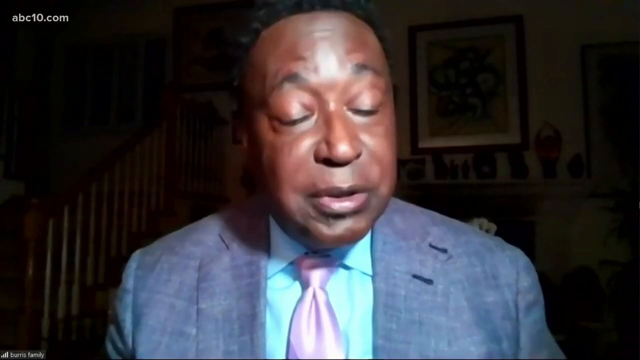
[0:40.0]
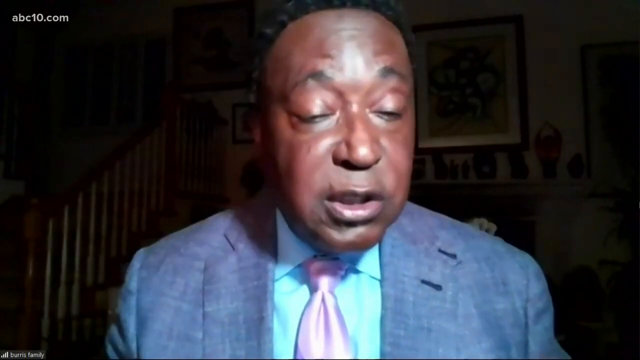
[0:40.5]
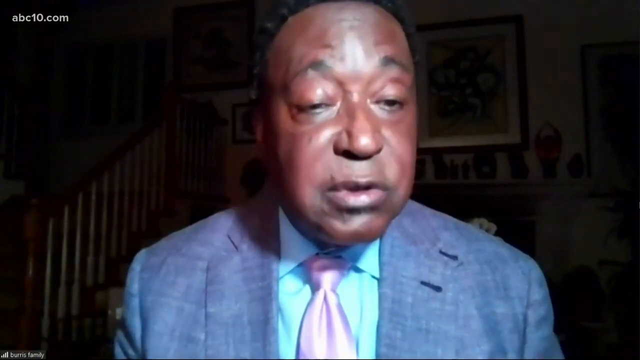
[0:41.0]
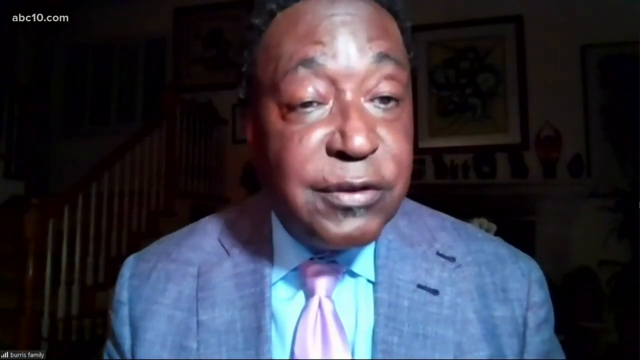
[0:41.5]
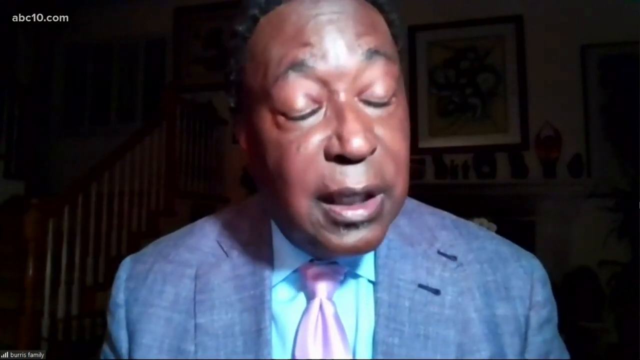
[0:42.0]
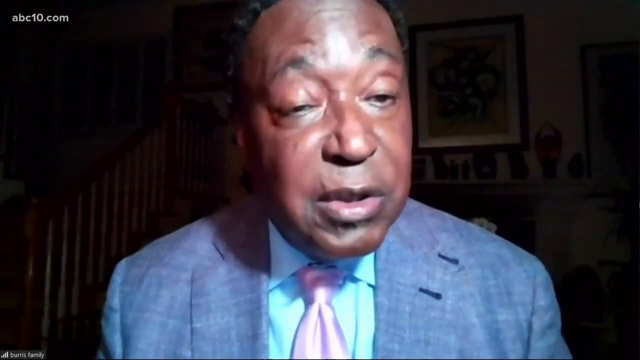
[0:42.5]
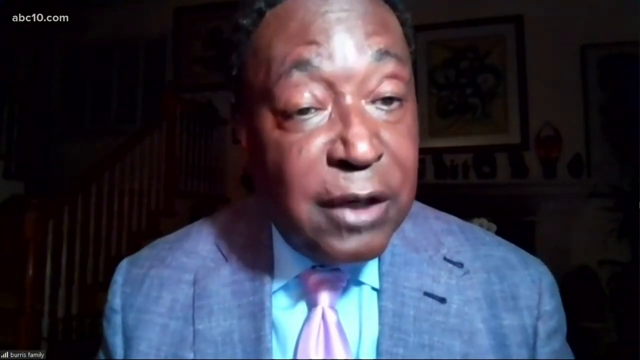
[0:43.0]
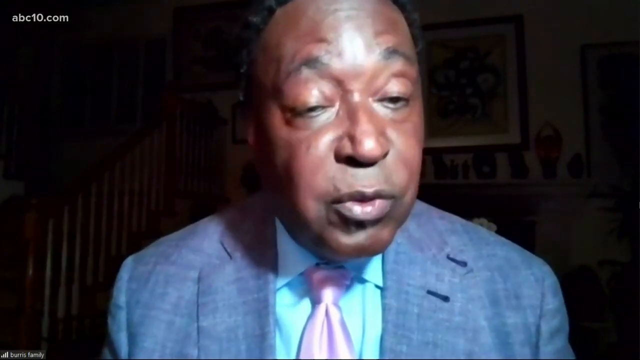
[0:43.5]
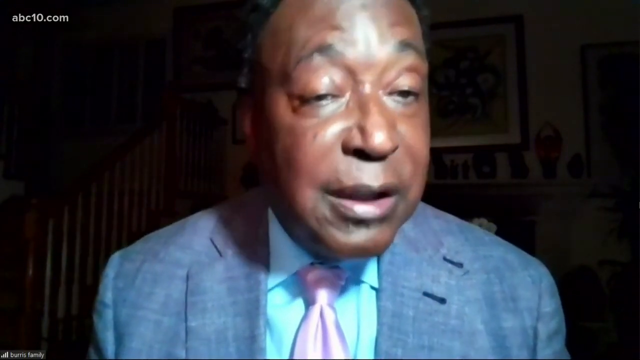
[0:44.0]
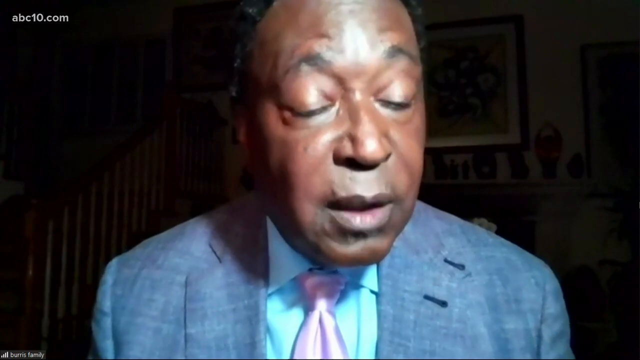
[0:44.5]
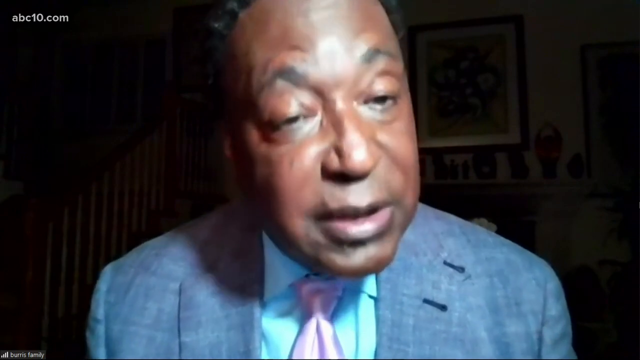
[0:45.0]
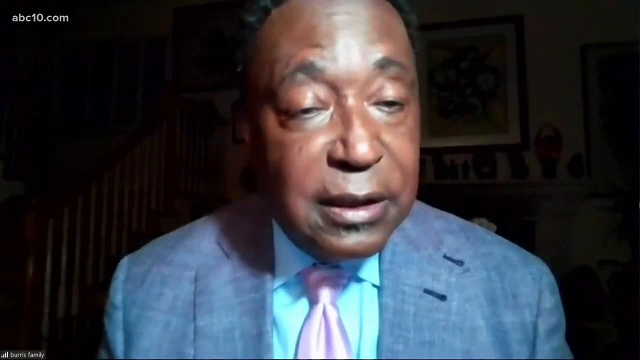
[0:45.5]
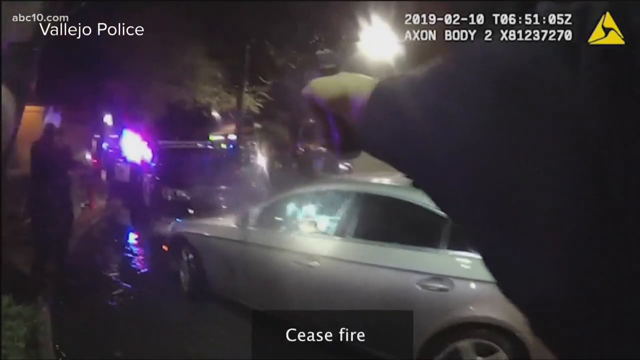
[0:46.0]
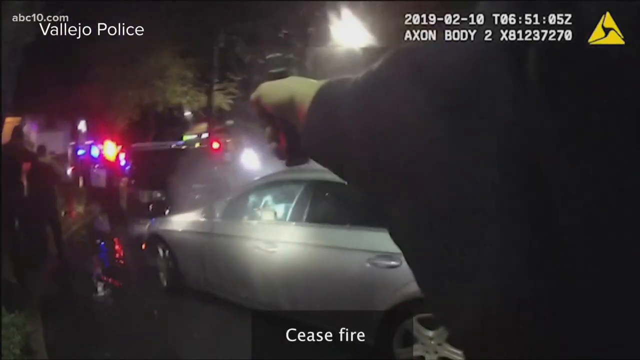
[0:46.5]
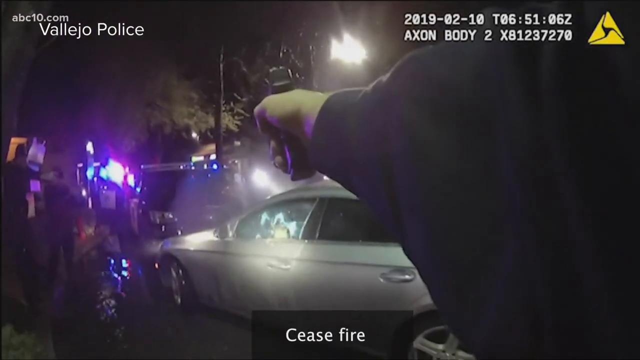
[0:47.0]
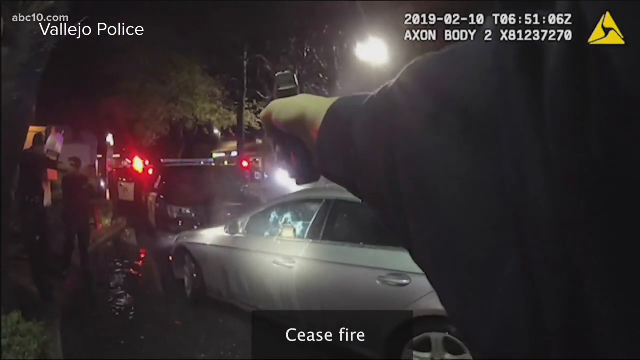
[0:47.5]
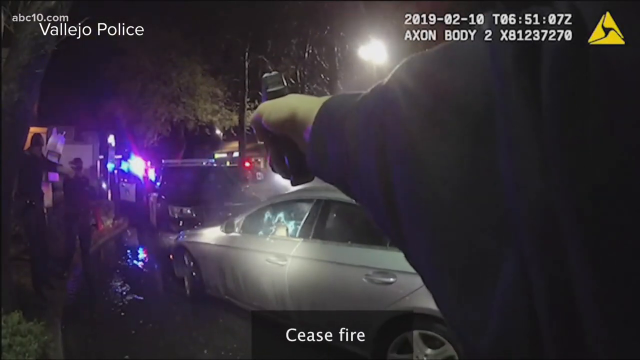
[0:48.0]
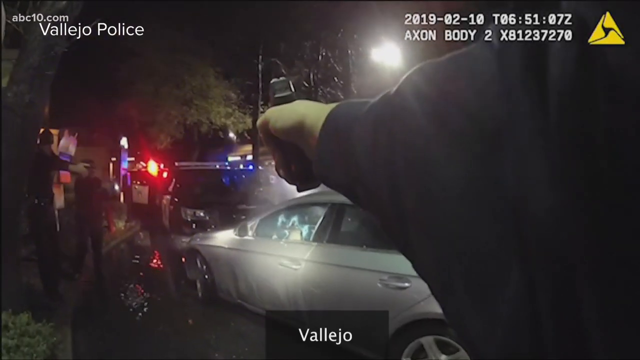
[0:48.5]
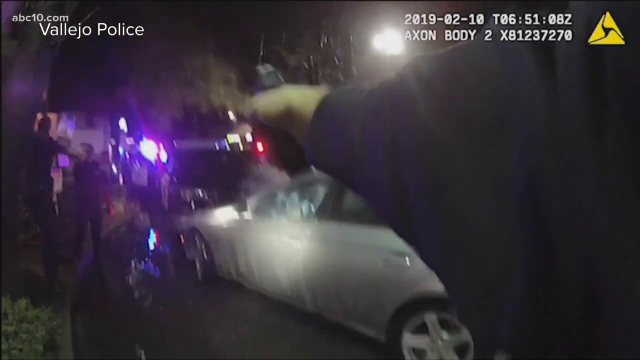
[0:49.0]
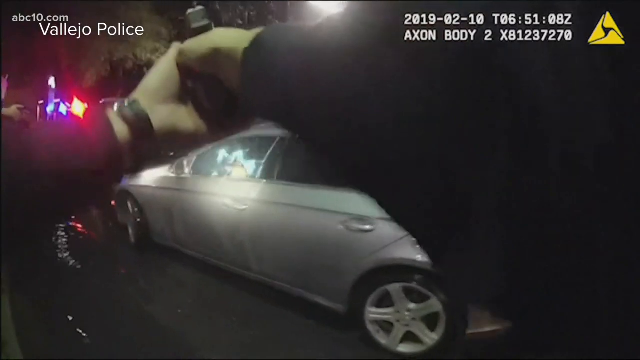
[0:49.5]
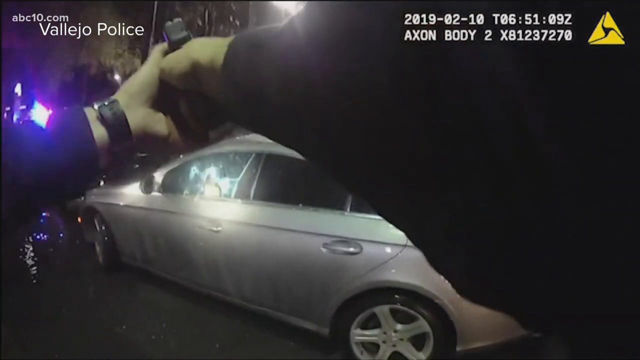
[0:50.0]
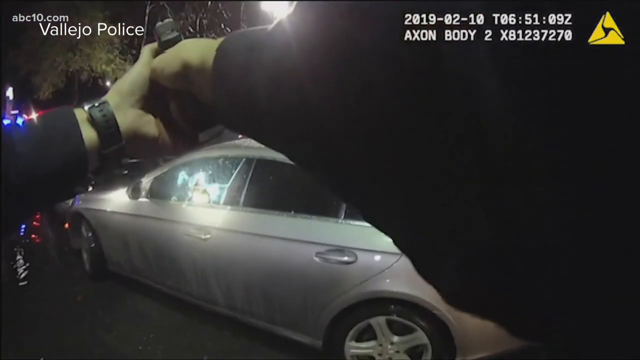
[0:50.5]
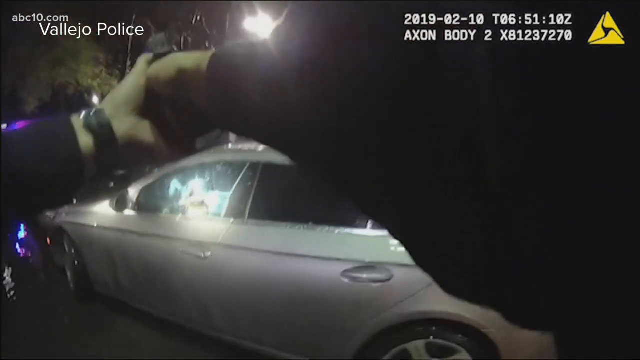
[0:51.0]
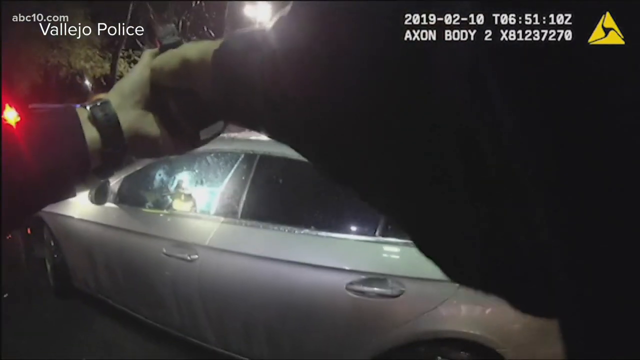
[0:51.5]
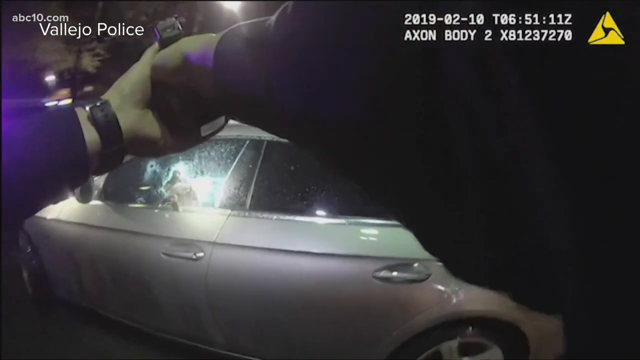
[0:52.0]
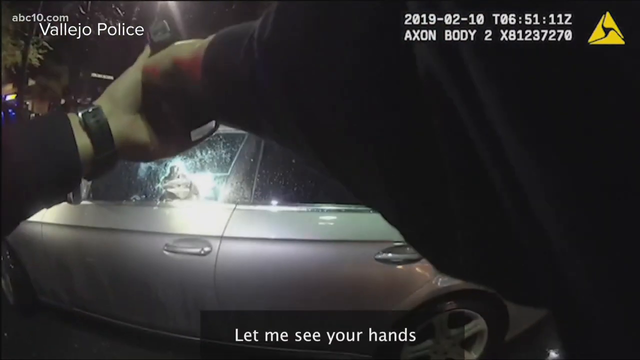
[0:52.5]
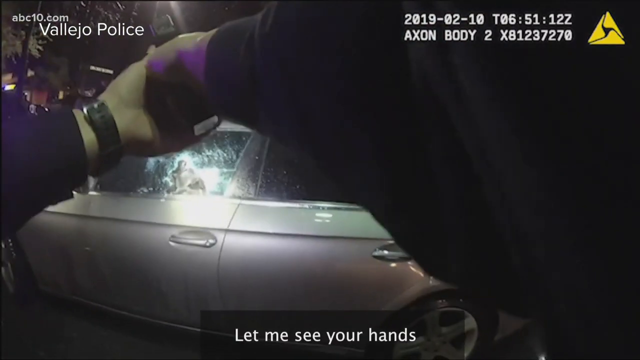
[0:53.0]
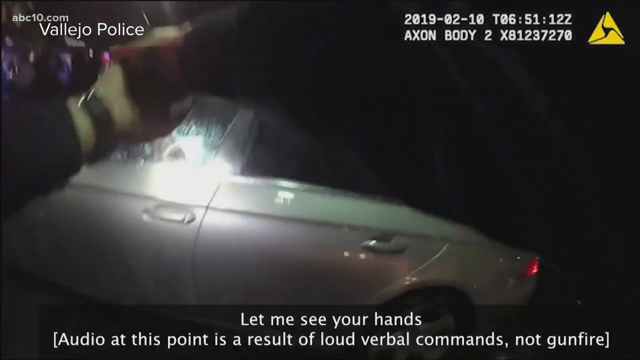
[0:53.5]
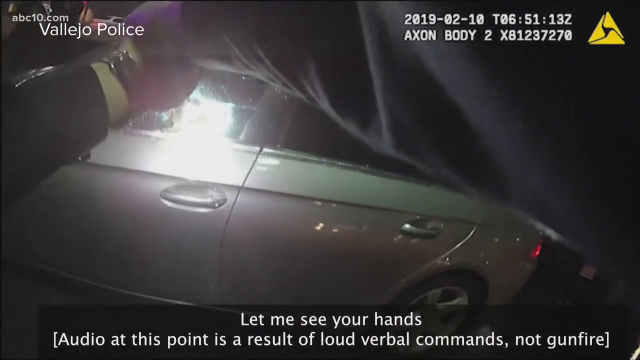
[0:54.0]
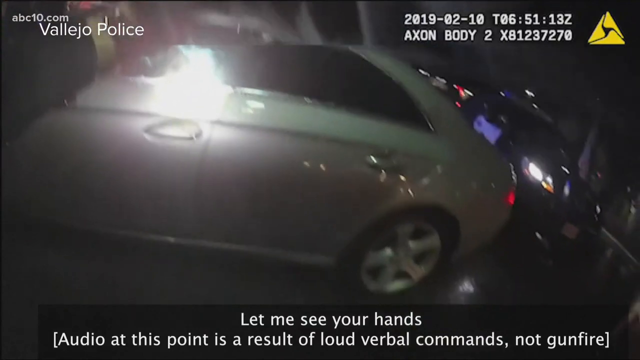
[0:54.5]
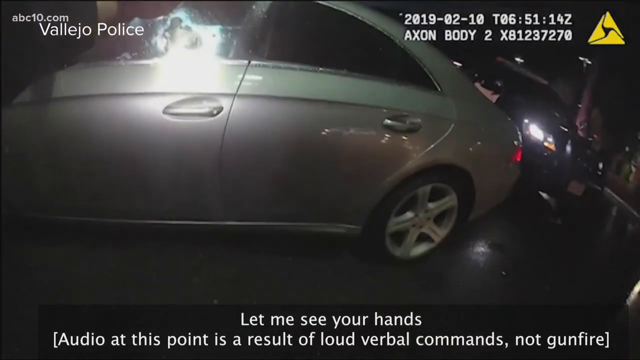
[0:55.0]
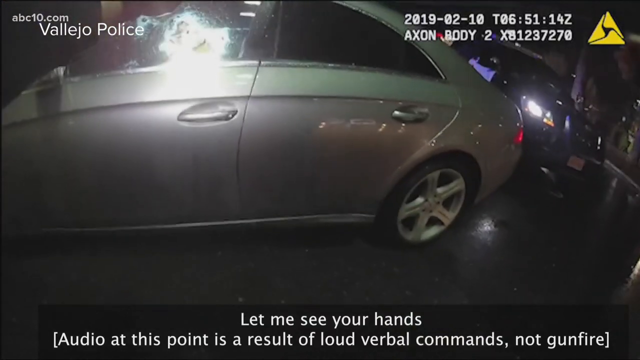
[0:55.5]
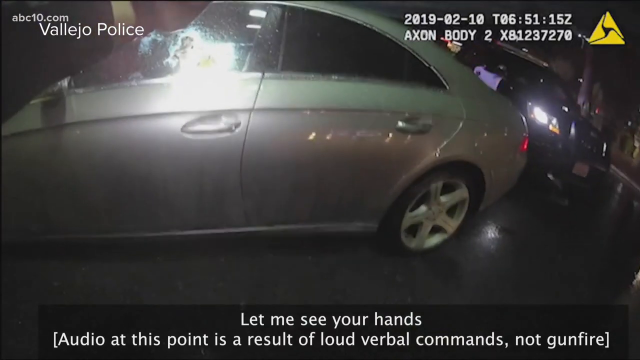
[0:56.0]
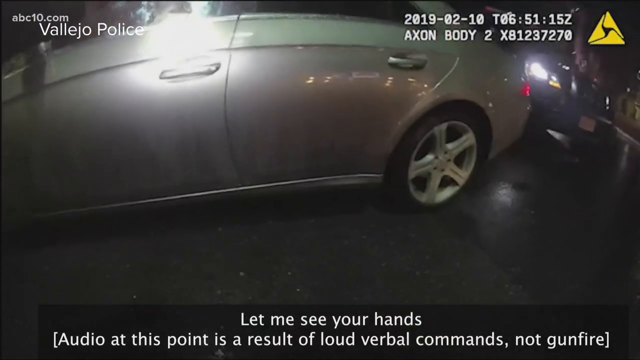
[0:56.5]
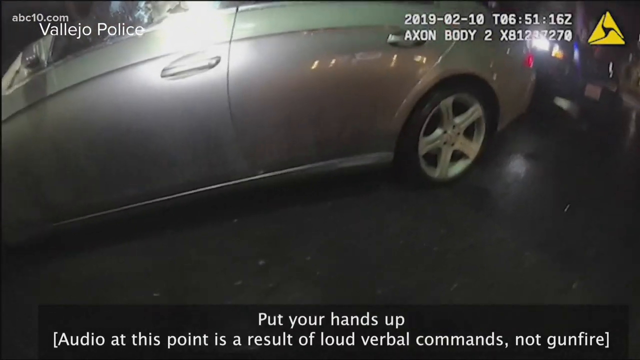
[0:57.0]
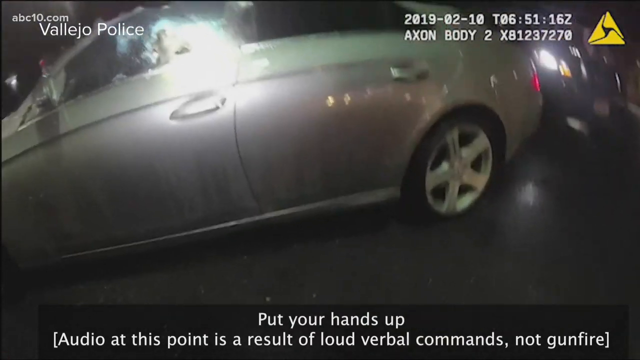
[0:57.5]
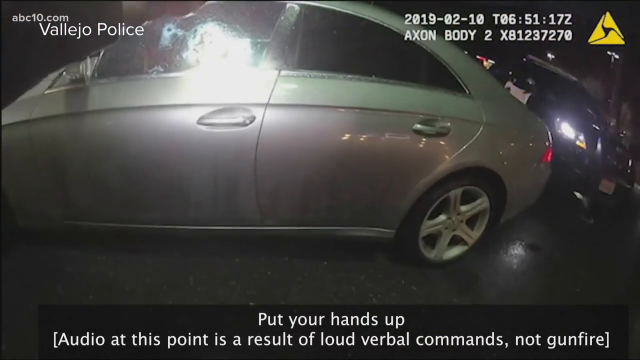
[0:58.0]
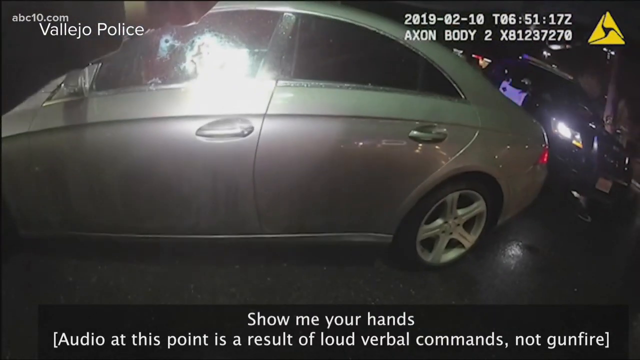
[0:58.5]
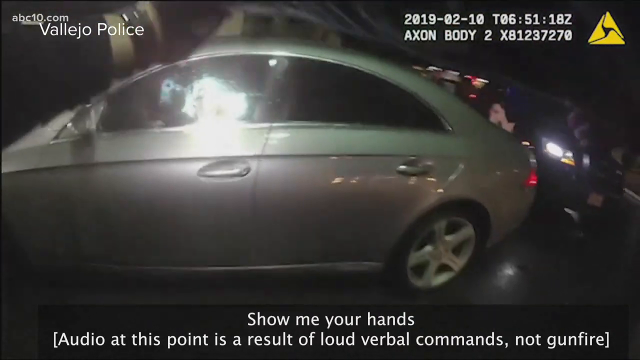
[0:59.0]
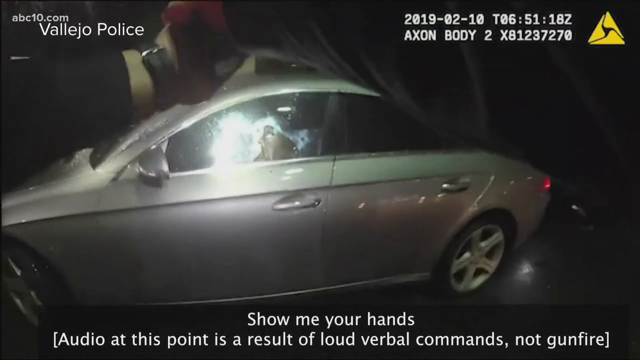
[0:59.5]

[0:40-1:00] The video cuts back to the man, likely a lawyer, in the virtual chat, probably with a news station. He looks quite serious and leans forward toward the camera many times, seemingly for emphasis. It then cuts to police body camera footage showing a right hand holding a gun that looks like a pistol, held with just the right hand. It is pointed at what looks like the silver car from the beginning of the video; this might be footage from the same incident before the officer gets that close. He appears to move closer to the driver window, which has bullet holes and cracked glass, apparently already shot at. A large chunk of the window is missing, and somebody is moving around inside the car. The officer now holds the gun kind of steady between both hands. Text at the bottom says "let me see your hands".